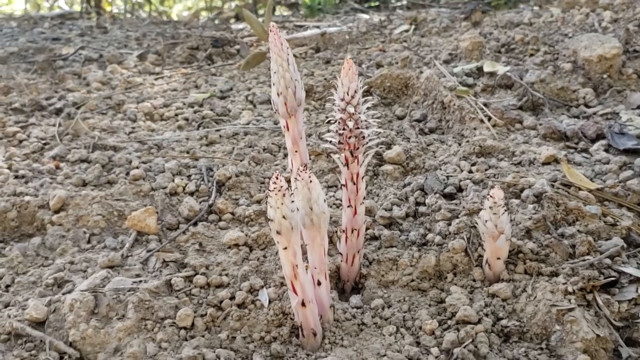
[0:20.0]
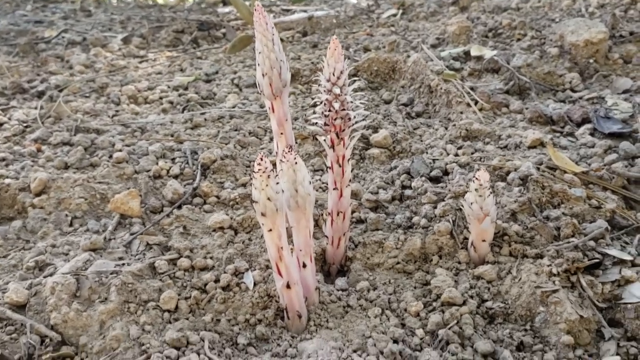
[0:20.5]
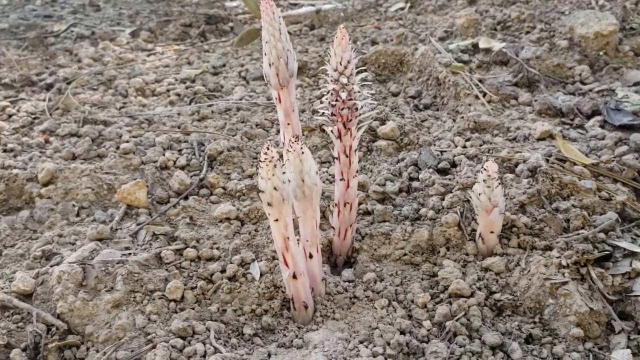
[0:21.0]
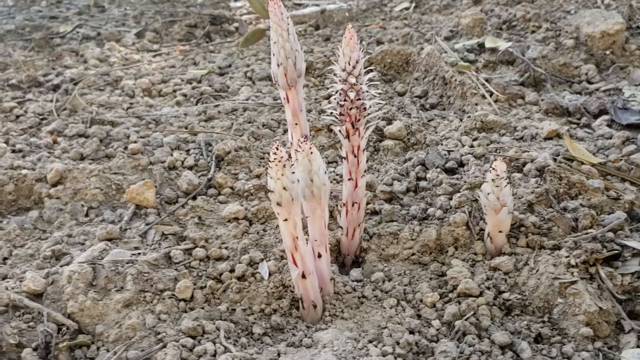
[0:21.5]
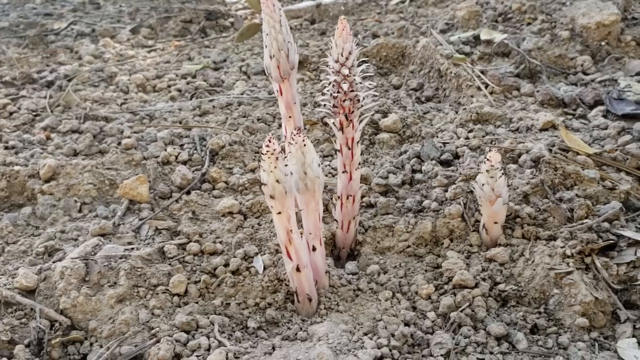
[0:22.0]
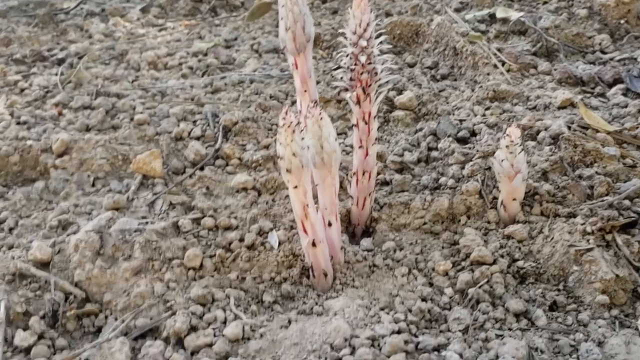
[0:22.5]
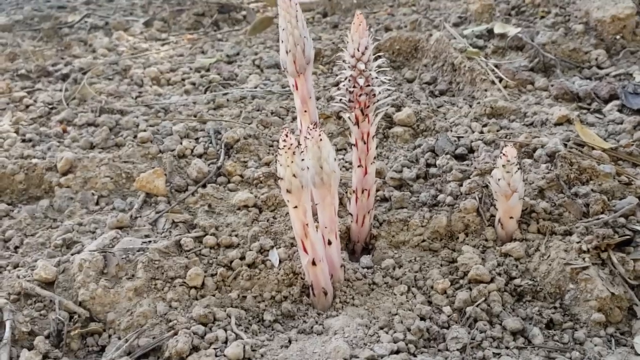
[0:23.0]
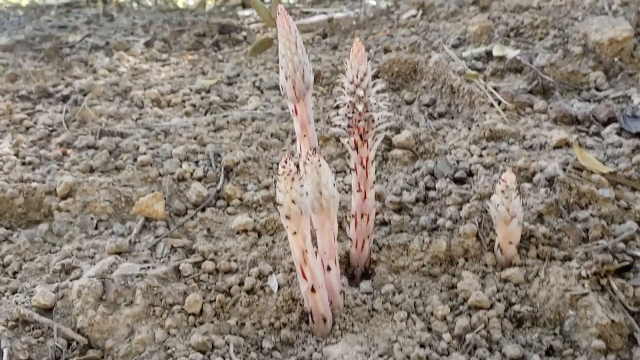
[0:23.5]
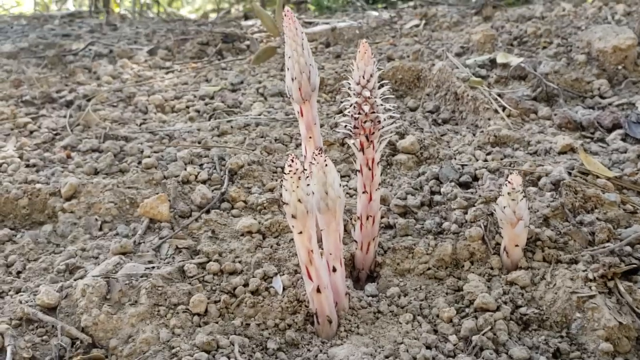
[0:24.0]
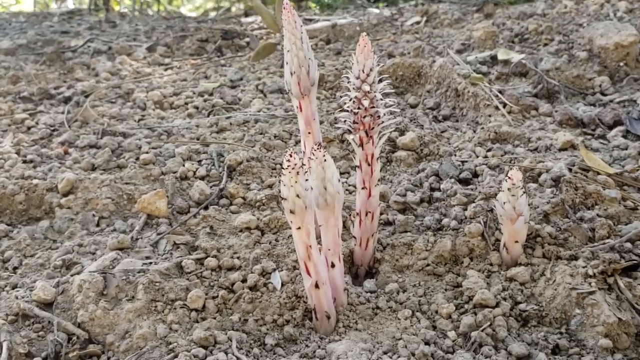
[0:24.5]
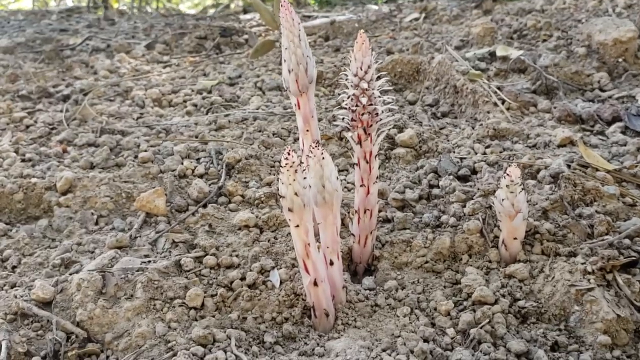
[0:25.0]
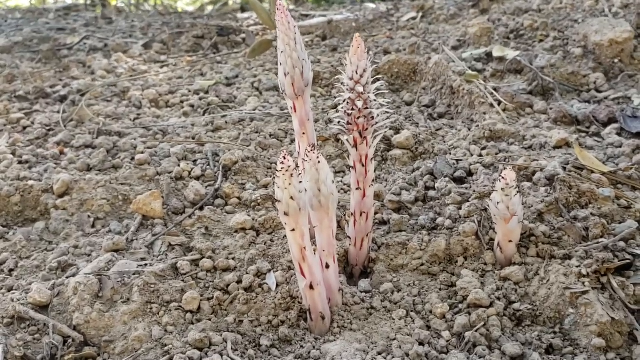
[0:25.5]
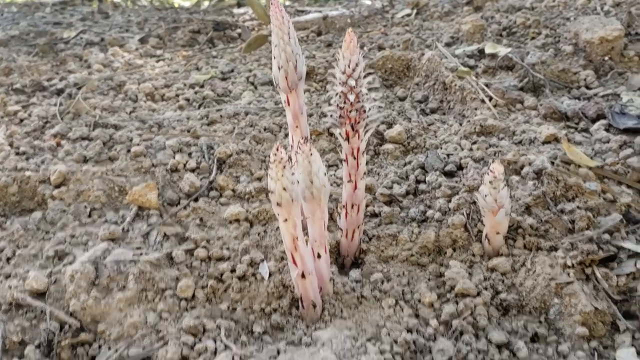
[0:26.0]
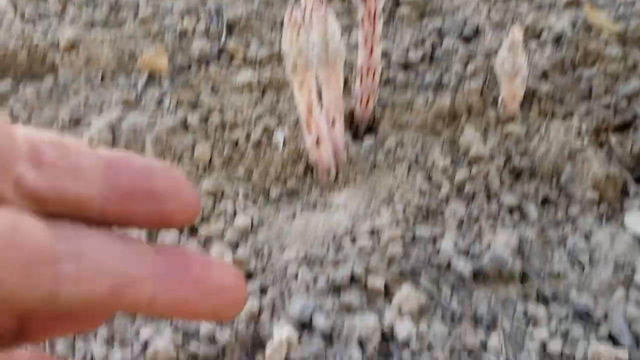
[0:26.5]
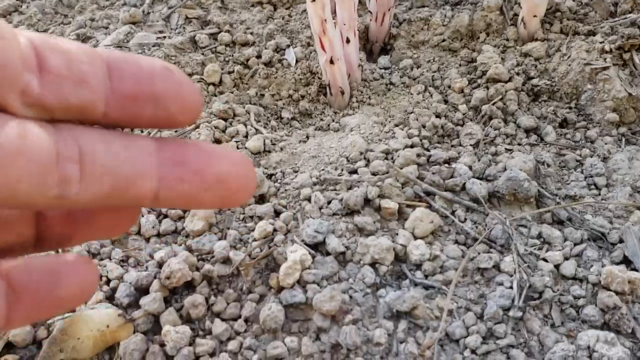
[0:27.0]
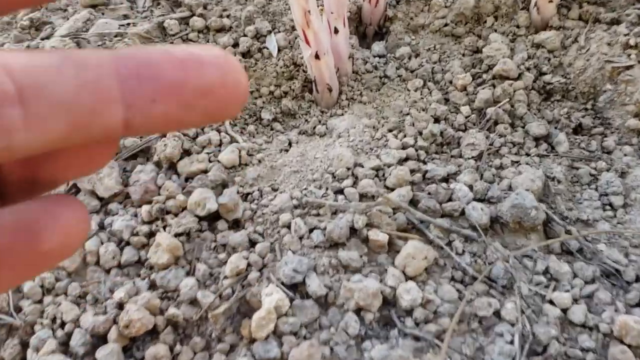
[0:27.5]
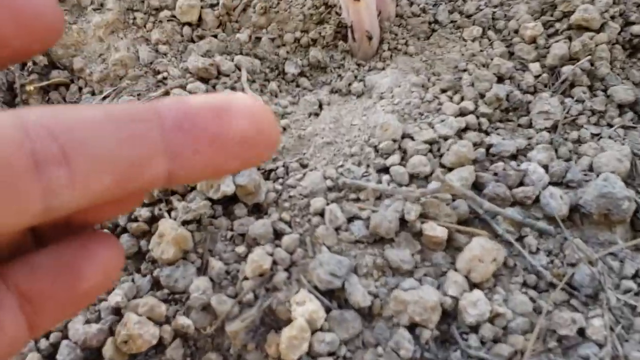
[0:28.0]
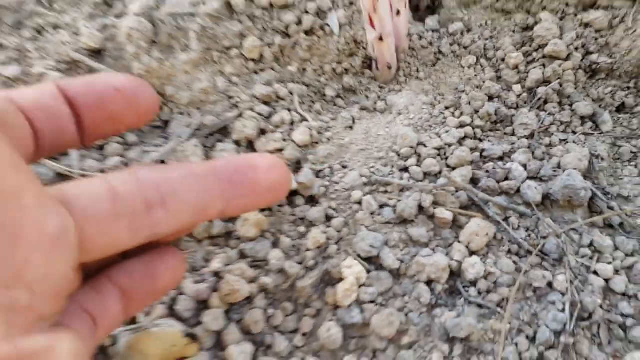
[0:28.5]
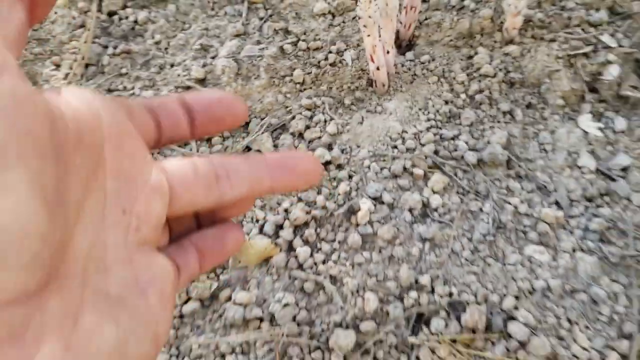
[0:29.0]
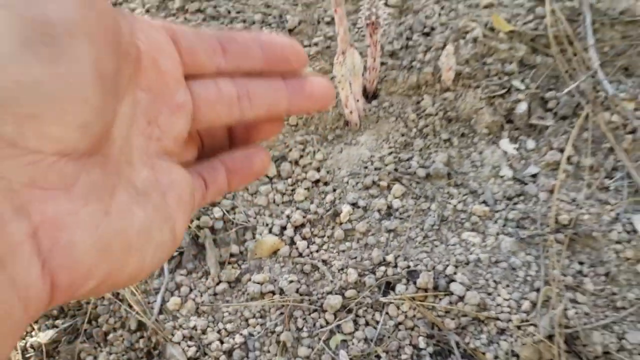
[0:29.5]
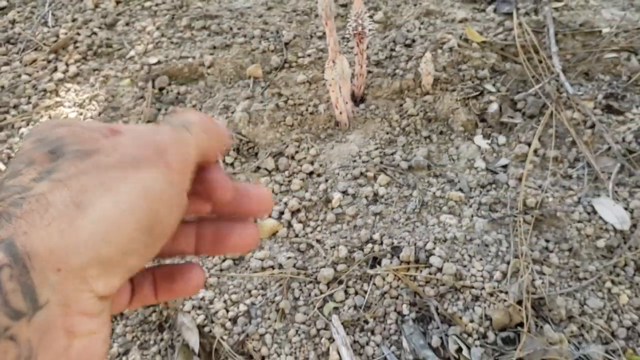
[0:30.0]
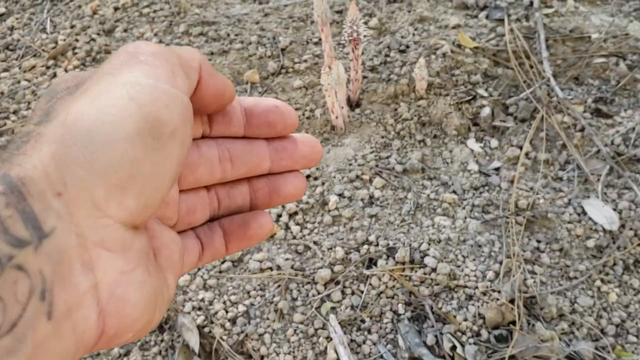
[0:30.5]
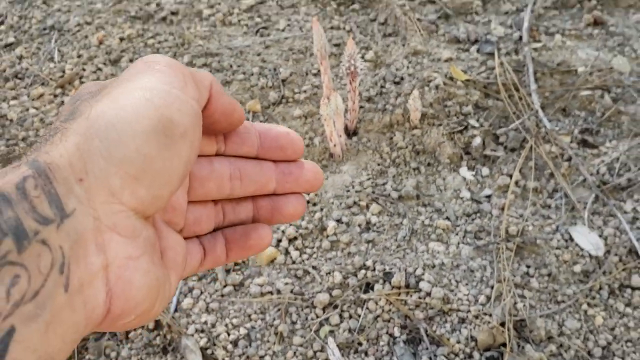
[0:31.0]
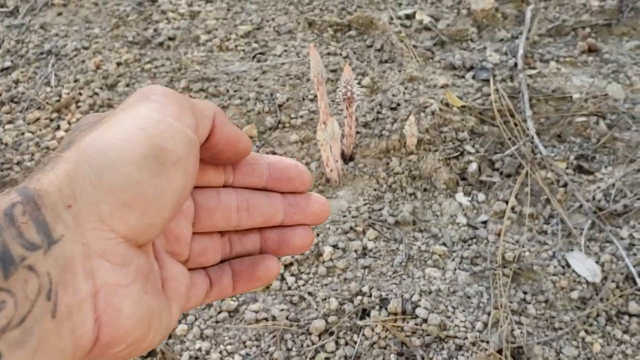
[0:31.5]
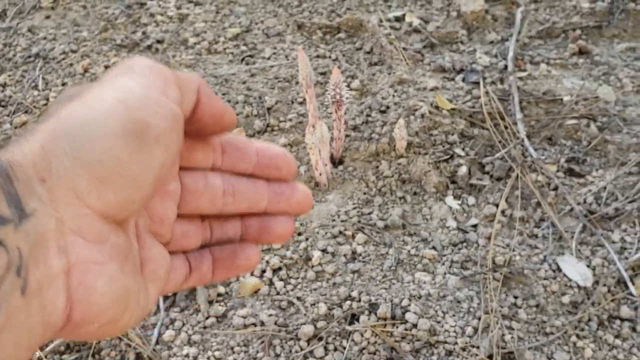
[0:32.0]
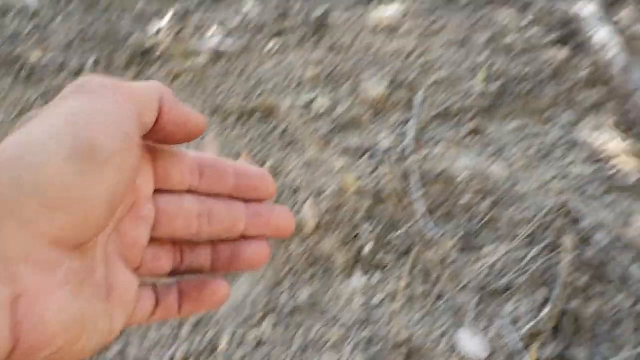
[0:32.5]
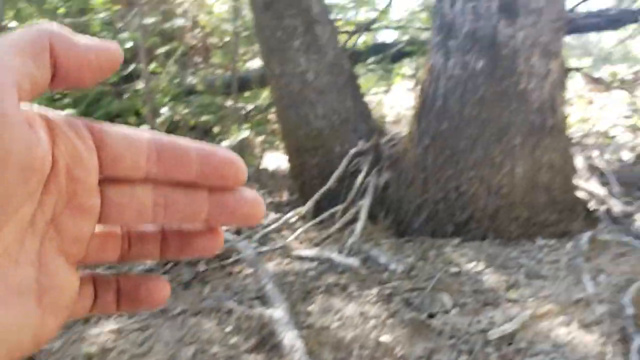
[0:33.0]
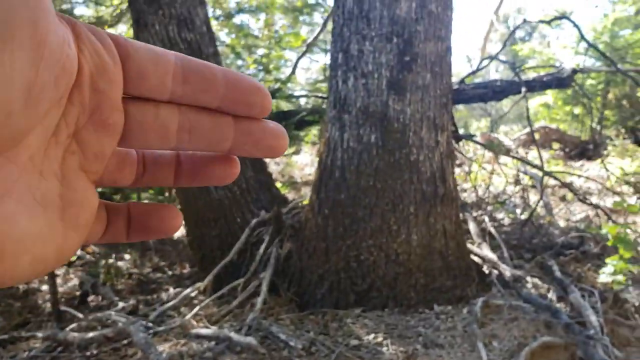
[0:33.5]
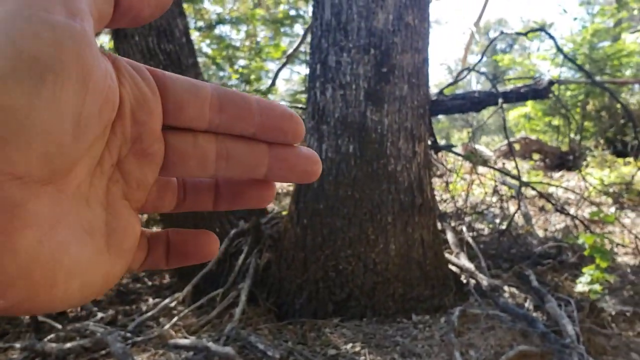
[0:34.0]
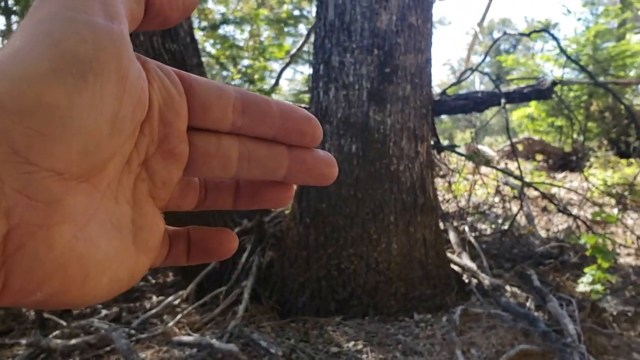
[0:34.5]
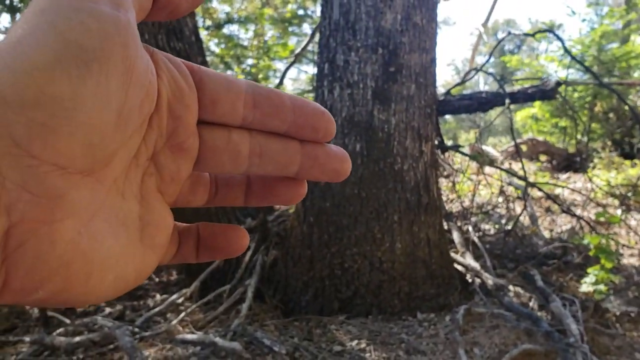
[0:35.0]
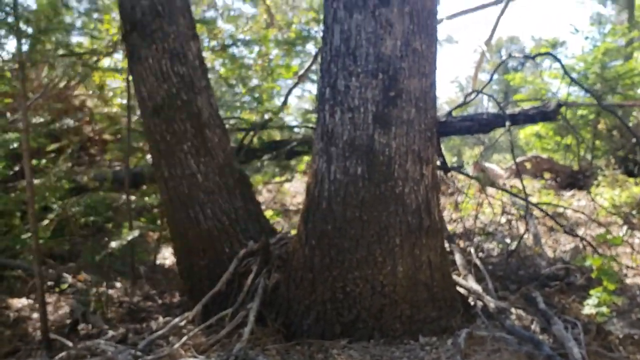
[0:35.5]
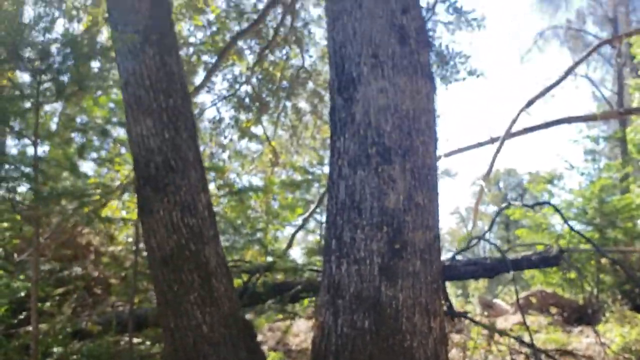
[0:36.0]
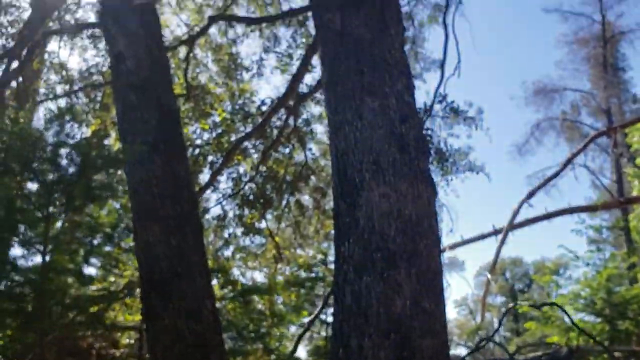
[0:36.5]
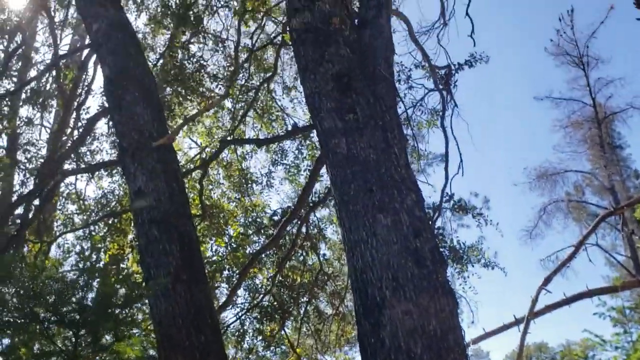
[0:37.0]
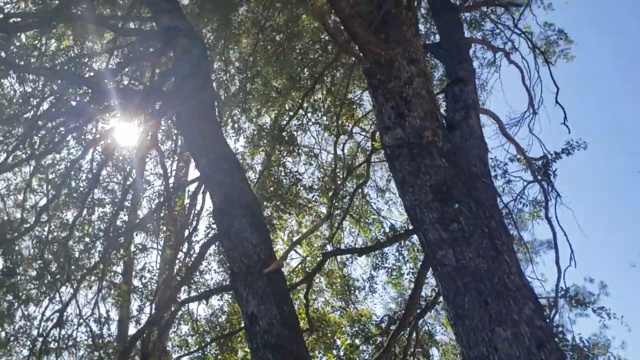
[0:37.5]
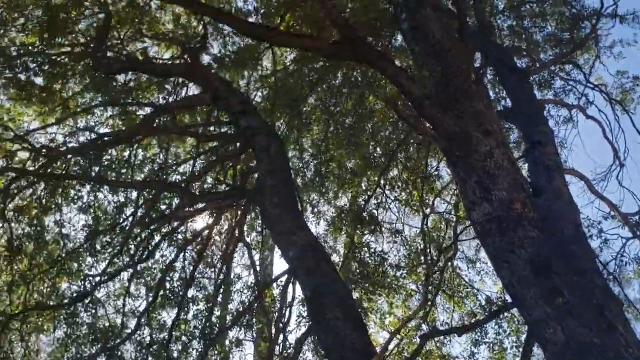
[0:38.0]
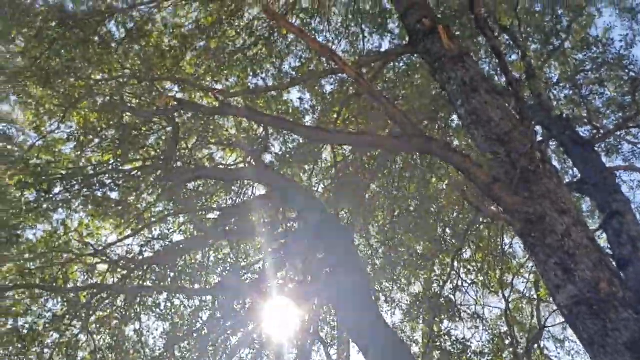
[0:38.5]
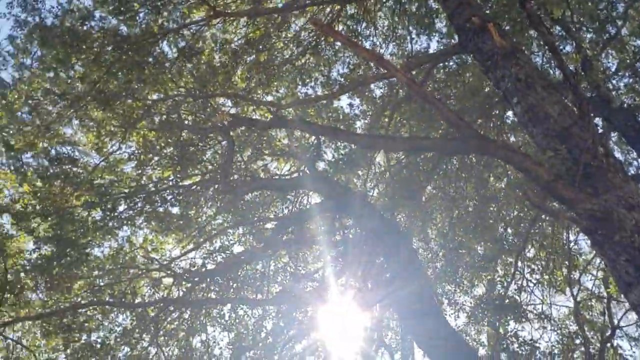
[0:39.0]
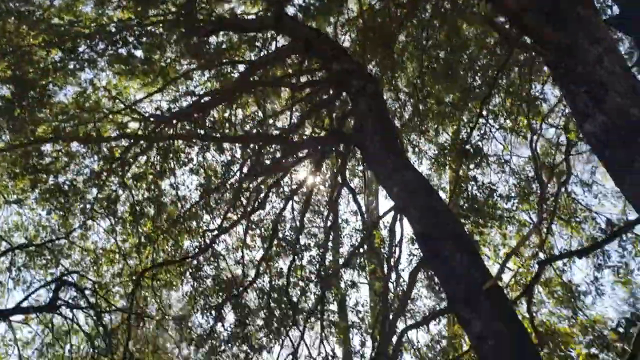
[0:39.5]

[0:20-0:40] The plant is still in view, showing its peach color with some tones of red around it. The sky is shown, along with the vegetation and the woods.